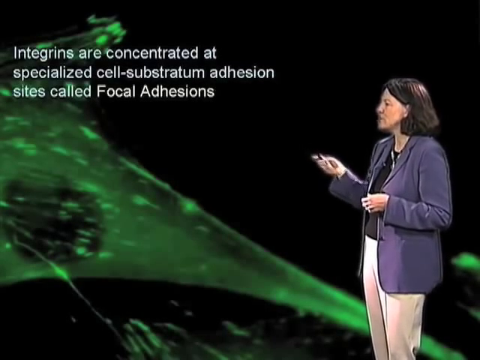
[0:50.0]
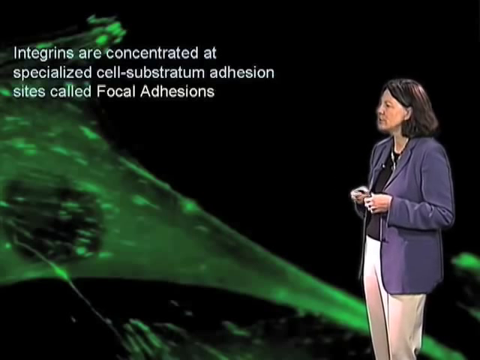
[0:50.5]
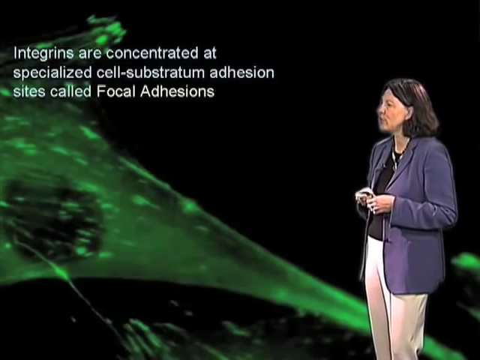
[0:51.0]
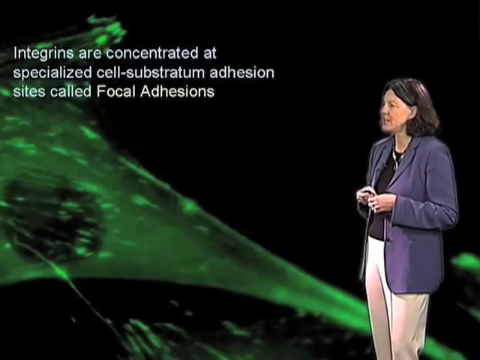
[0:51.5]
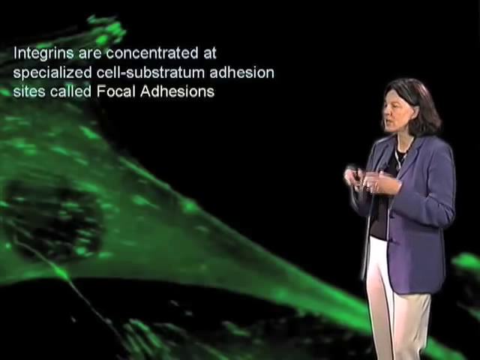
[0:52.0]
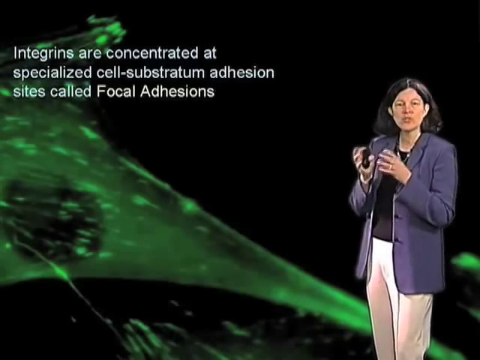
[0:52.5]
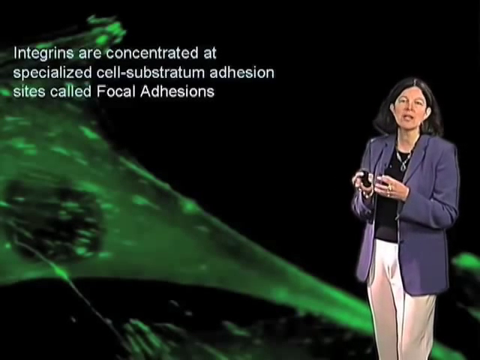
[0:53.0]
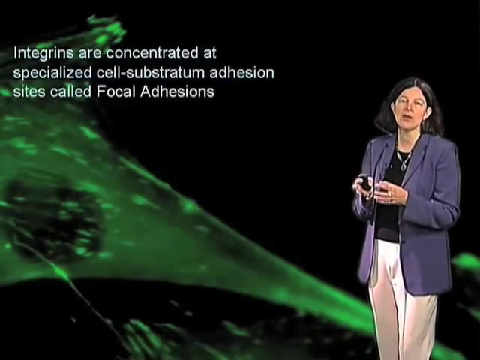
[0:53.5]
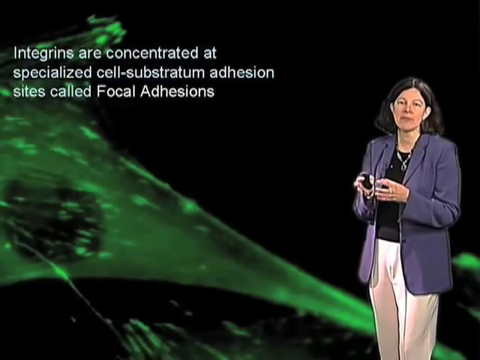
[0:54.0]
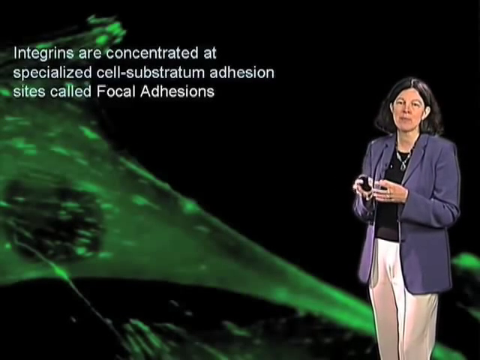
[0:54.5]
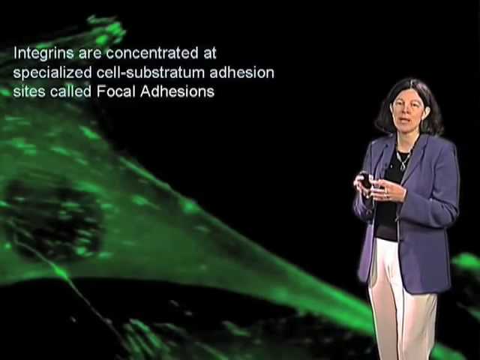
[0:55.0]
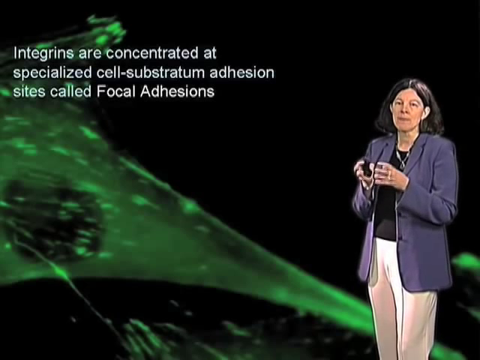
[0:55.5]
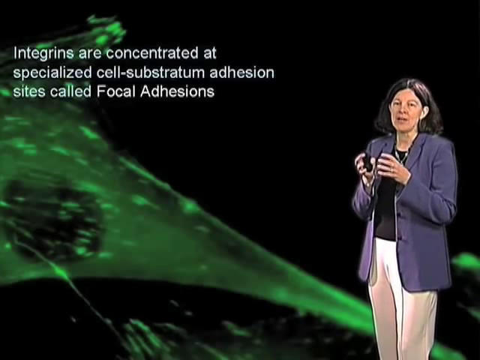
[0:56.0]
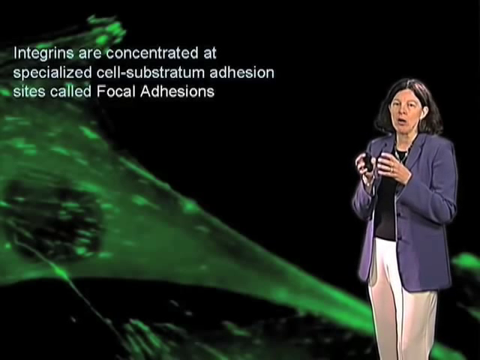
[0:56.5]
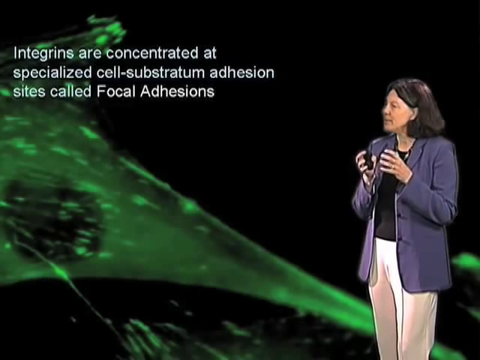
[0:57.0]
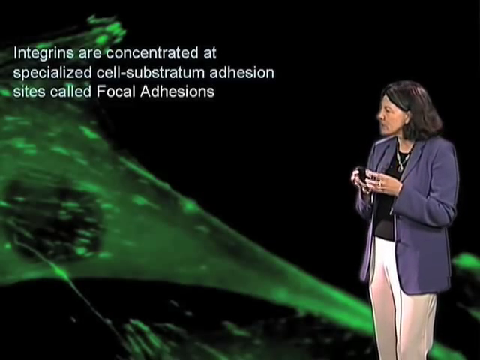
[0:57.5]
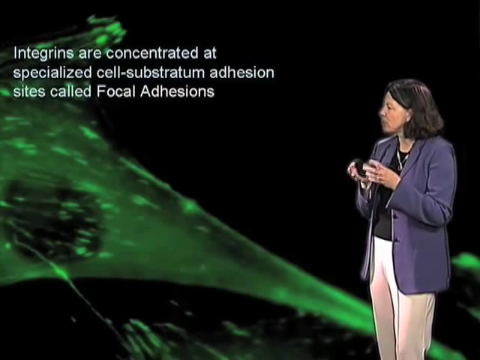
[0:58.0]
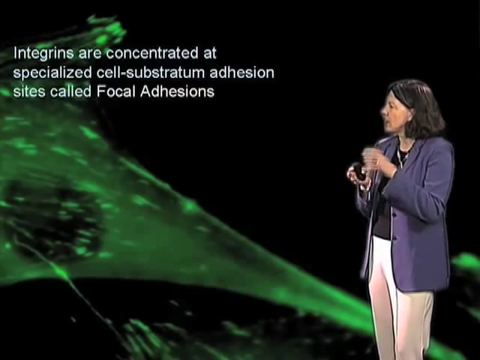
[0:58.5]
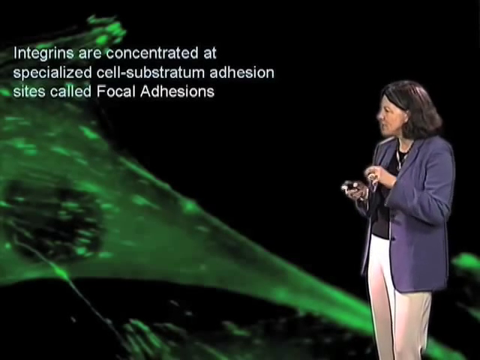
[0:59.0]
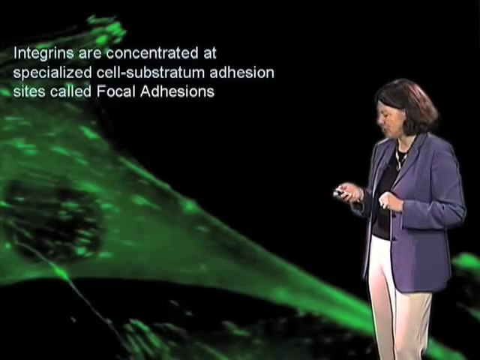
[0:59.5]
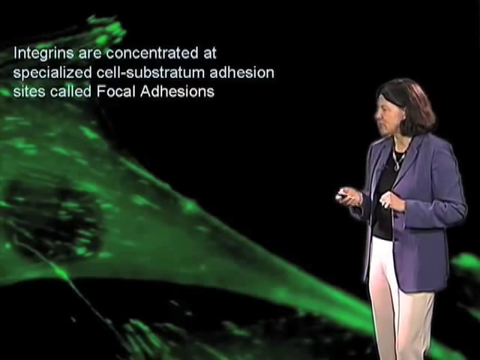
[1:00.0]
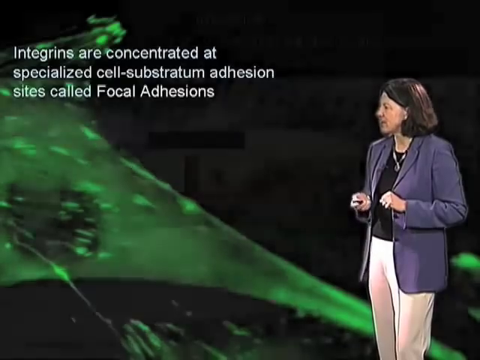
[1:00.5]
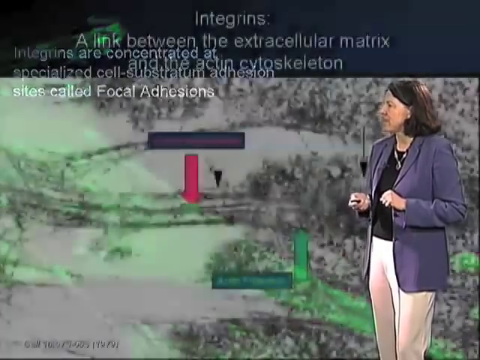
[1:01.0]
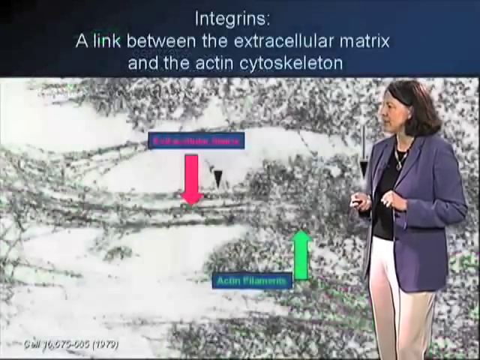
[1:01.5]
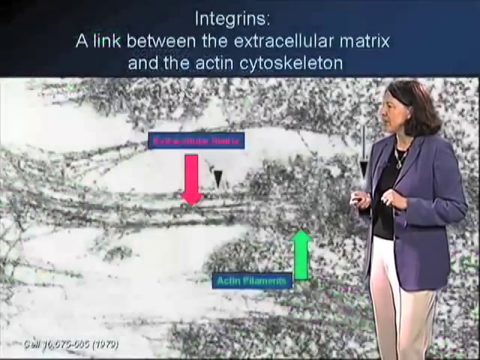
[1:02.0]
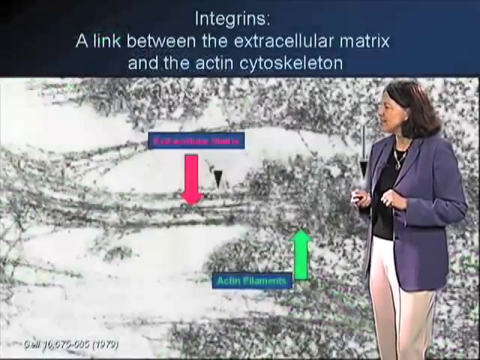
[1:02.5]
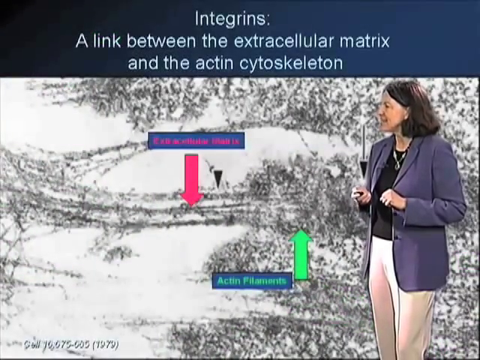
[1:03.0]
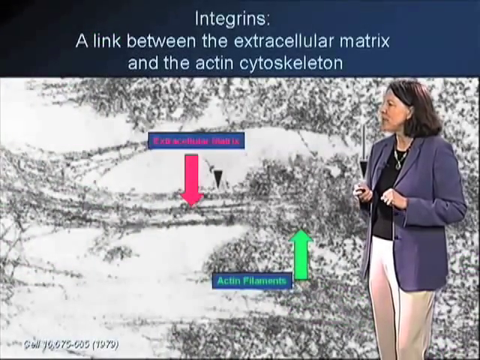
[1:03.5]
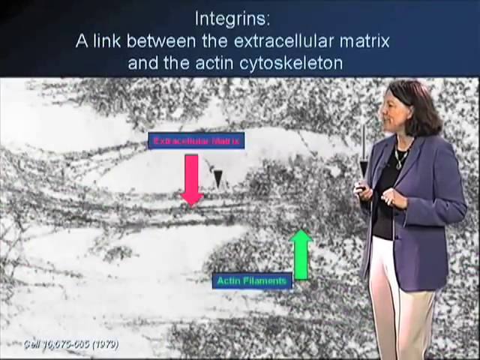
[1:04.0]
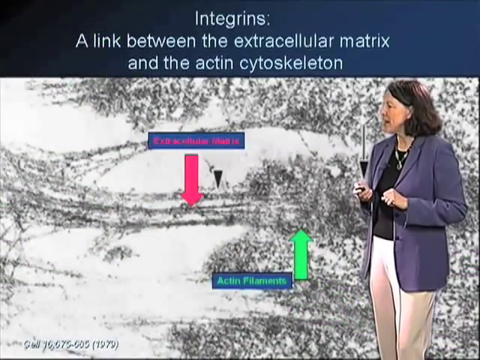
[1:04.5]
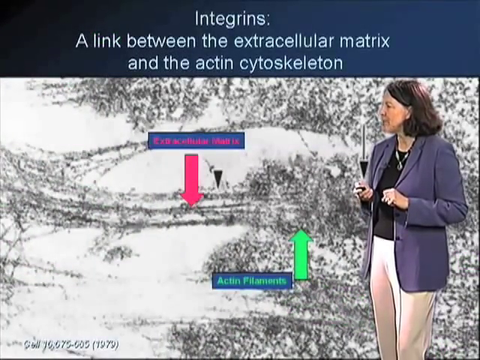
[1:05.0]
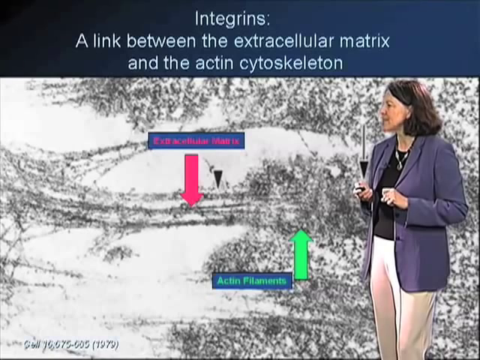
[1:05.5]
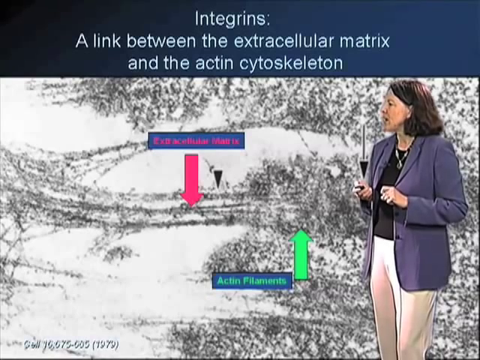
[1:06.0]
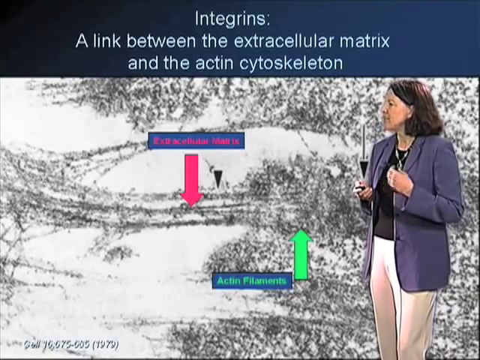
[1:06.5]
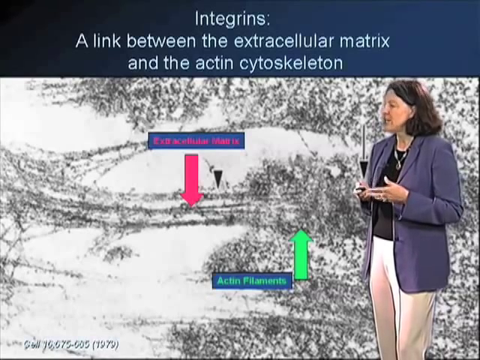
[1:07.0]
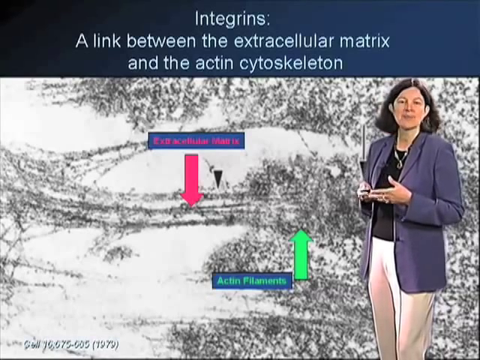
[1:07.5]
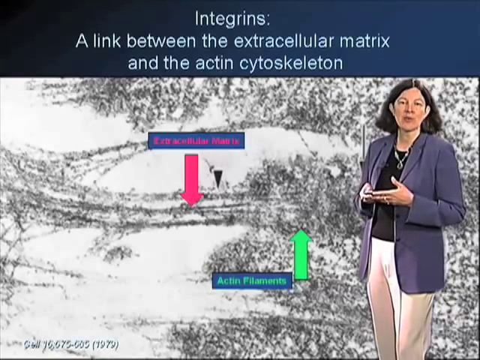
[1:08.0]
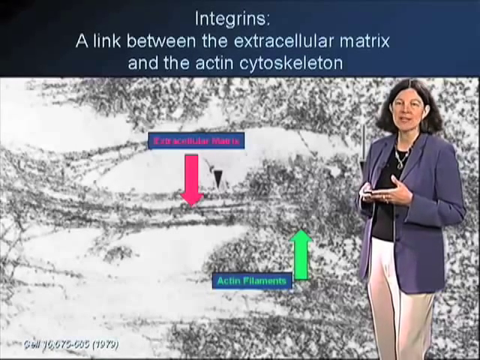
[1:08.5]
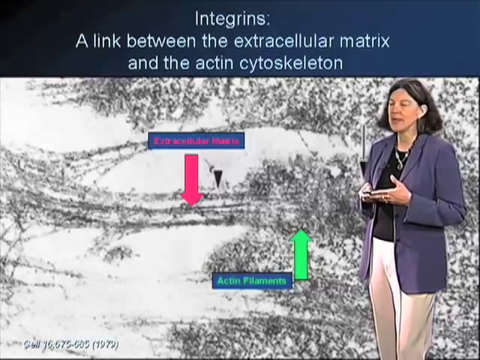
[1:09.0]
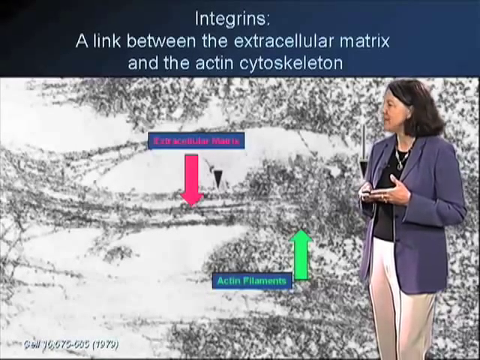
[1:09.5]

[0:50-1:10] A woman on the right side of the screen wears a suit jacket and beige pants. Behind her is a solid black and green background with a small amount of white text in the top right corner identifying where integrins are concentrated. She uses her hands for emphasis as she speaks toward the camera, looking at the text. She looks down at her clicker and presses it, and the background changes entirely. The woman remains in the same place, and the background now shows a description of integrins and the link they form, along with a large diagram taking up most of the screen, with arrows and labels pointing to specific features. She continues talking both toward the screen and toward the camera.